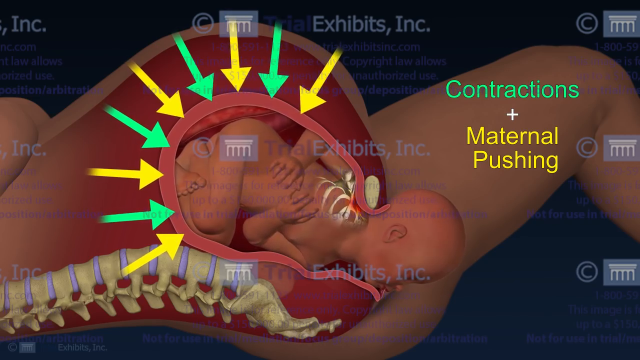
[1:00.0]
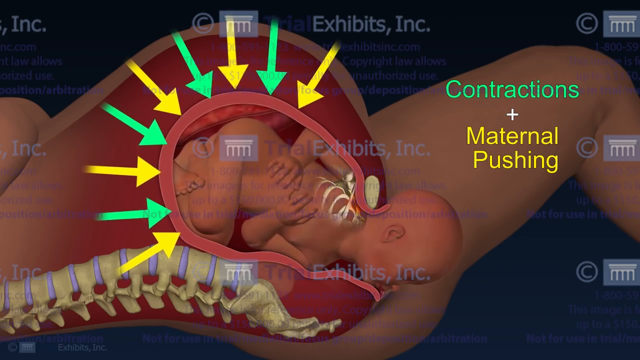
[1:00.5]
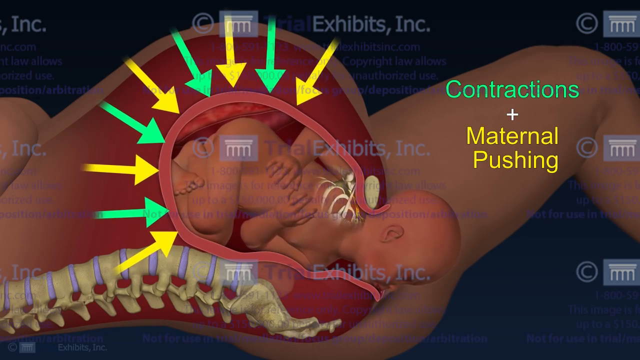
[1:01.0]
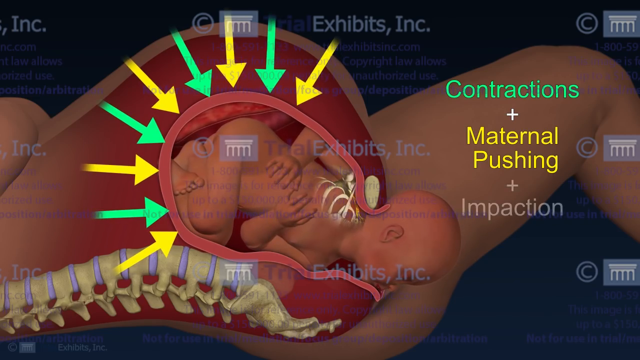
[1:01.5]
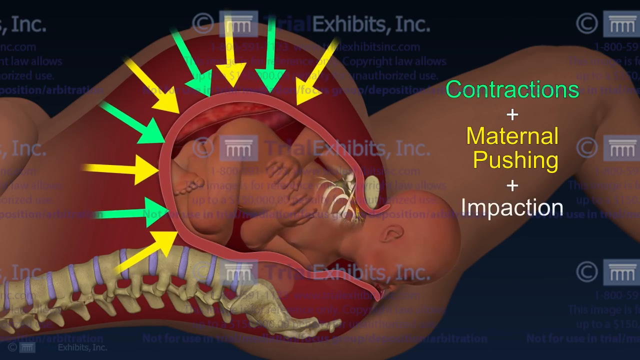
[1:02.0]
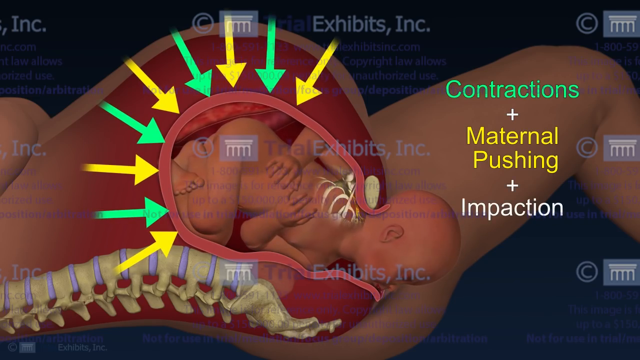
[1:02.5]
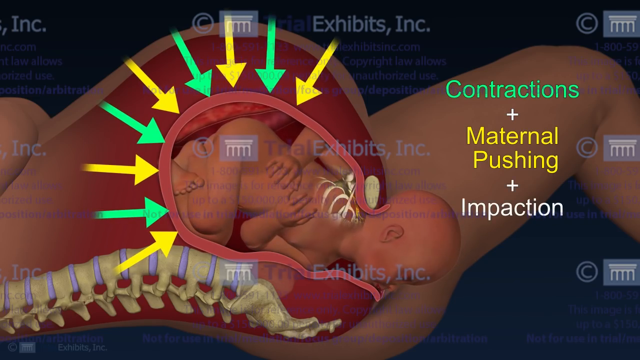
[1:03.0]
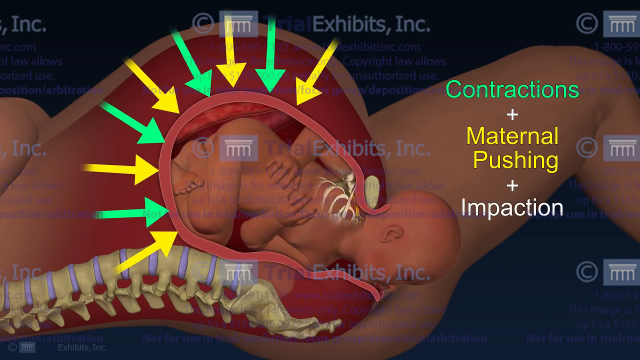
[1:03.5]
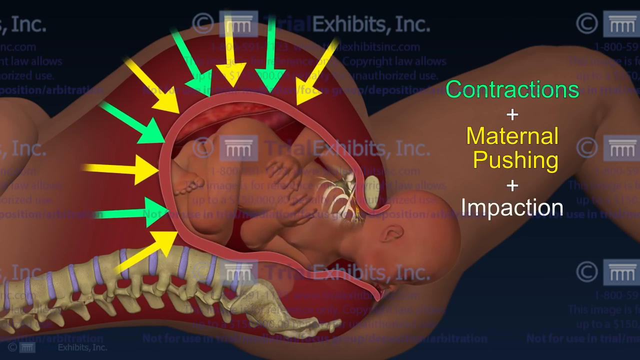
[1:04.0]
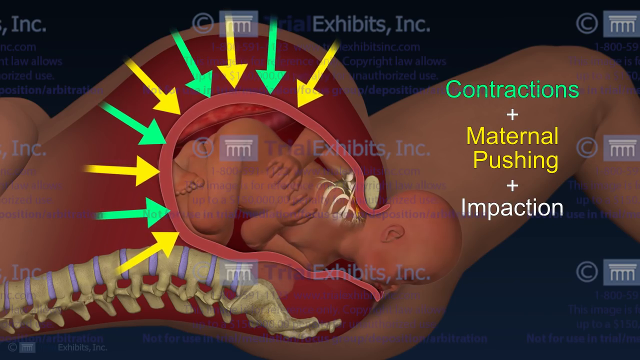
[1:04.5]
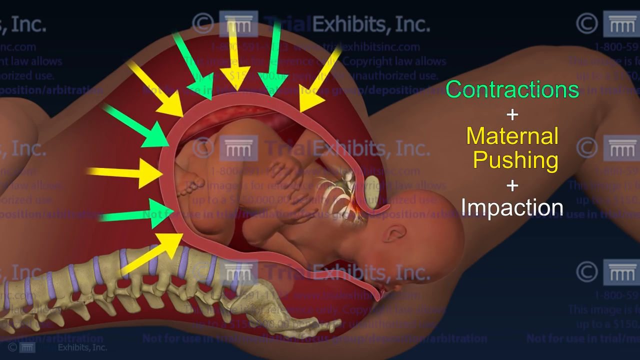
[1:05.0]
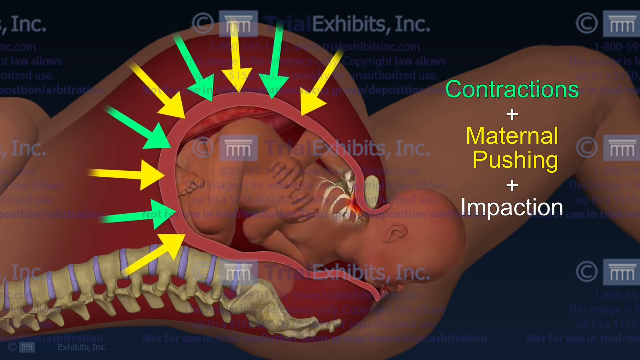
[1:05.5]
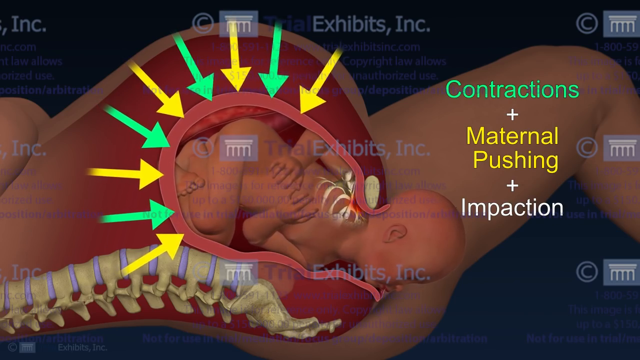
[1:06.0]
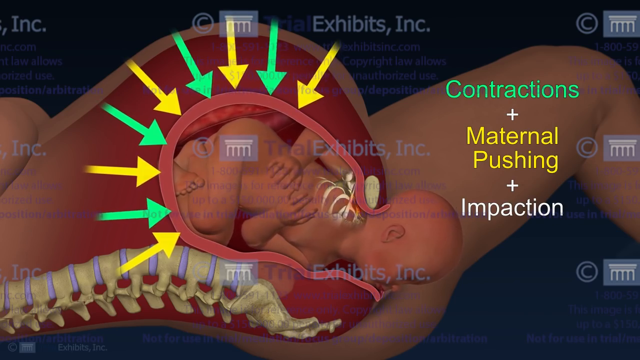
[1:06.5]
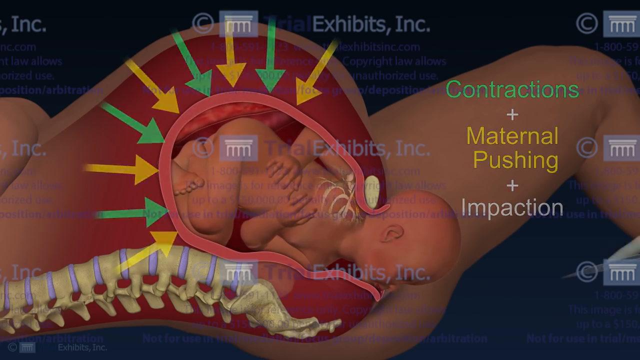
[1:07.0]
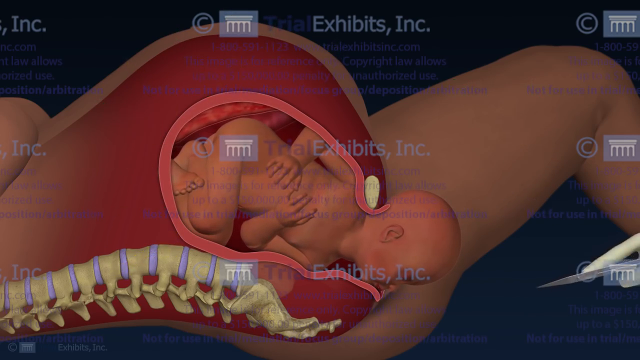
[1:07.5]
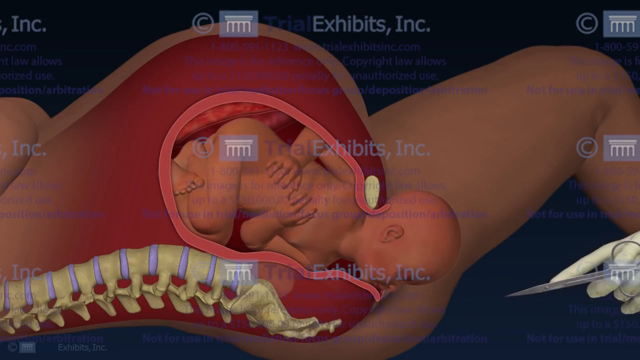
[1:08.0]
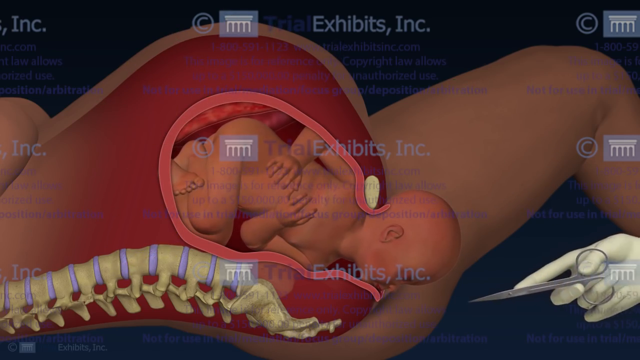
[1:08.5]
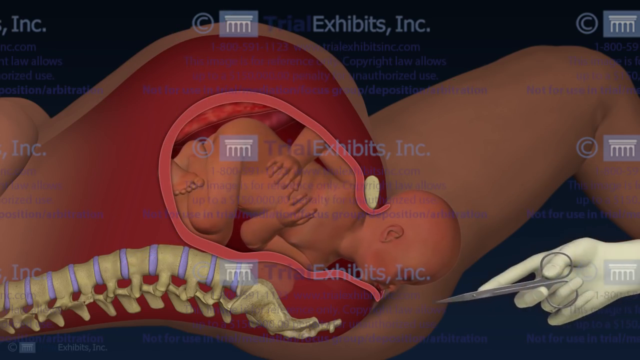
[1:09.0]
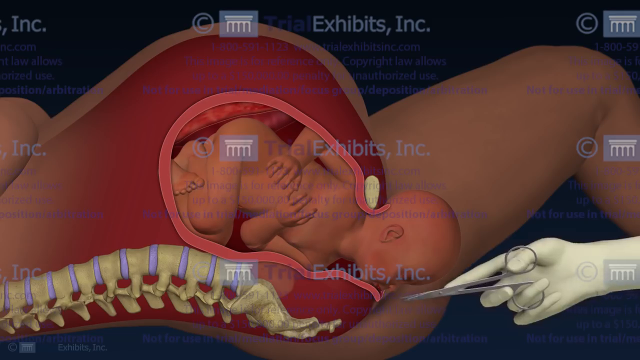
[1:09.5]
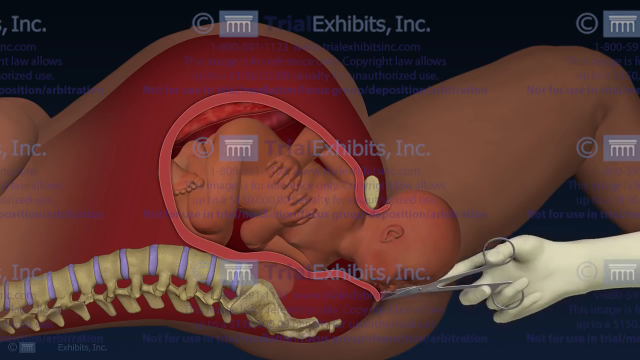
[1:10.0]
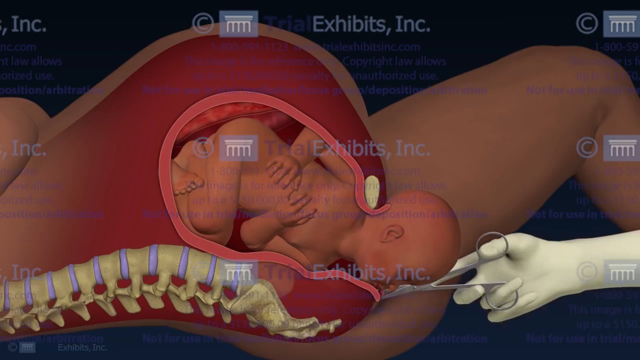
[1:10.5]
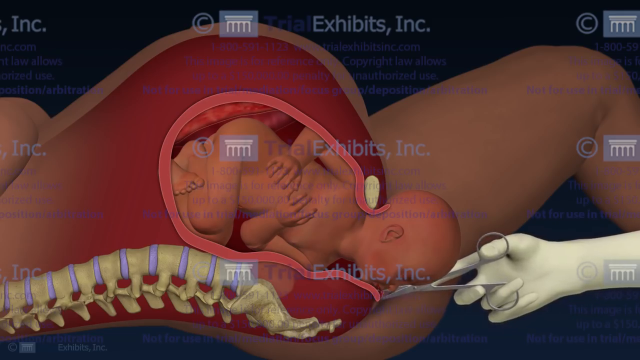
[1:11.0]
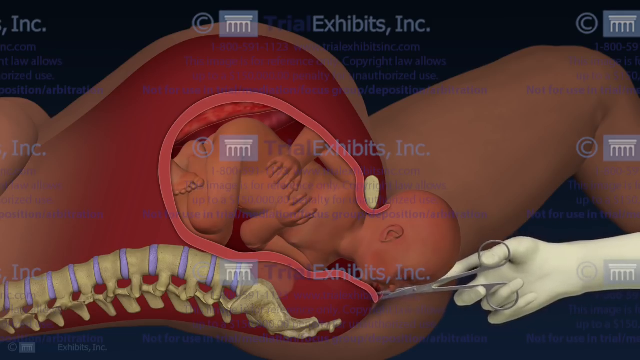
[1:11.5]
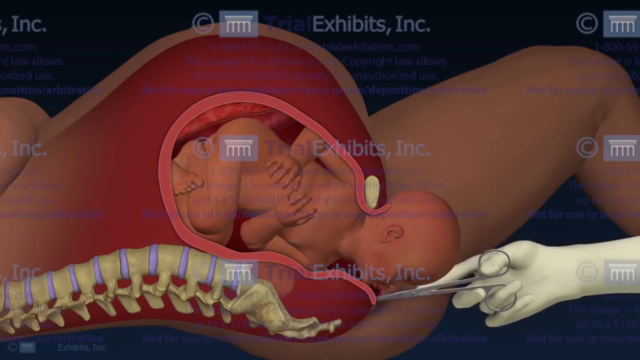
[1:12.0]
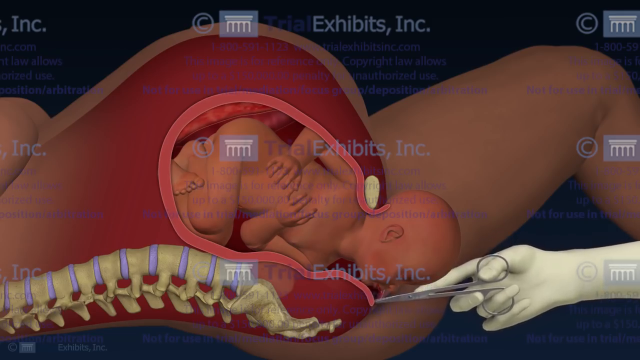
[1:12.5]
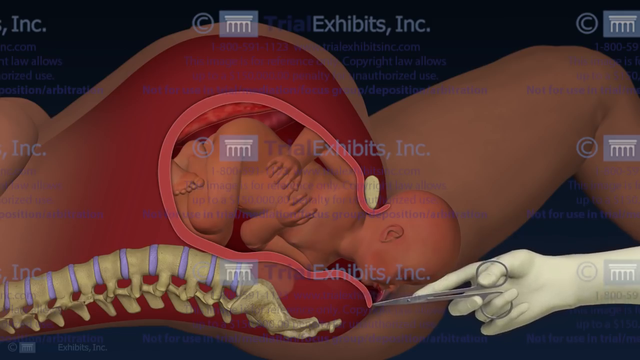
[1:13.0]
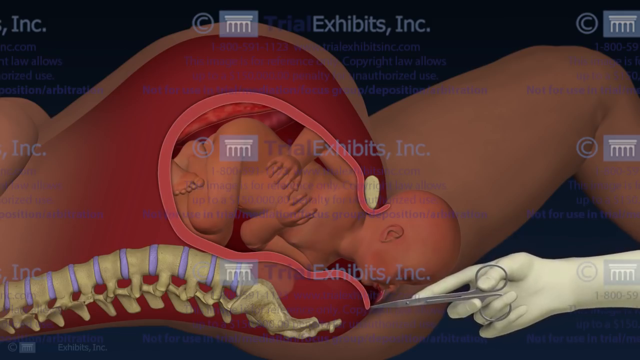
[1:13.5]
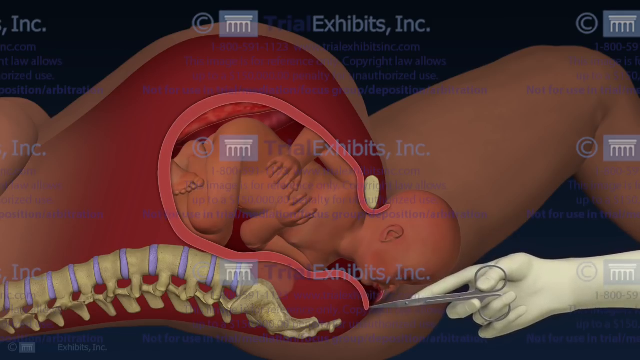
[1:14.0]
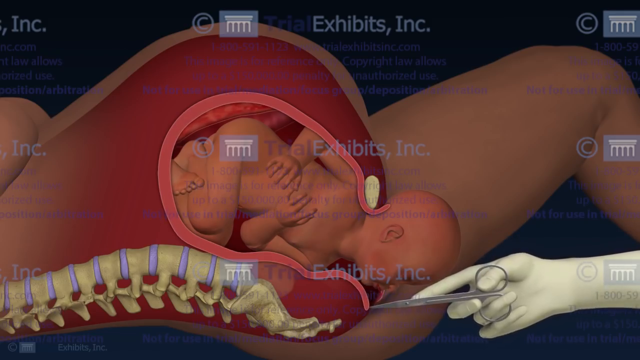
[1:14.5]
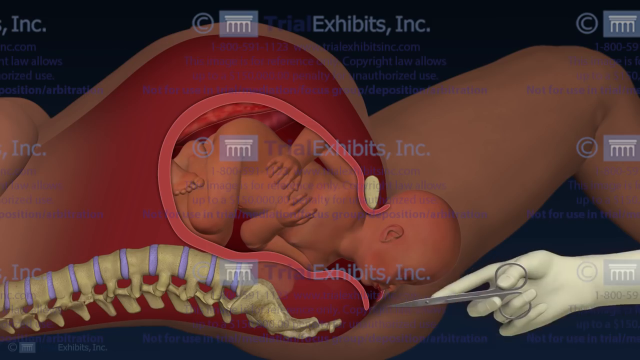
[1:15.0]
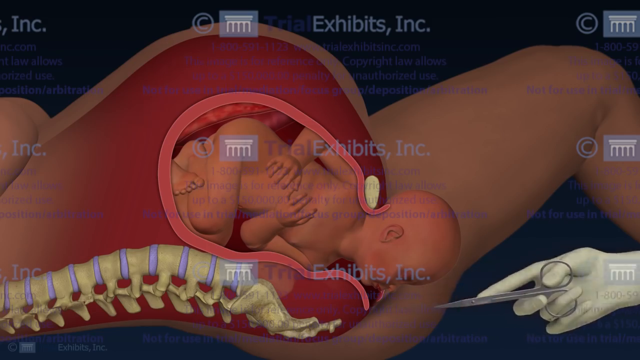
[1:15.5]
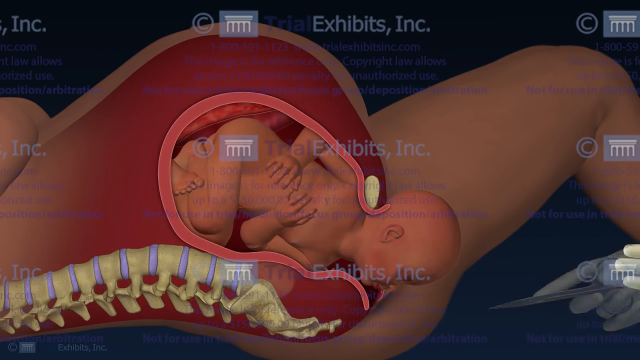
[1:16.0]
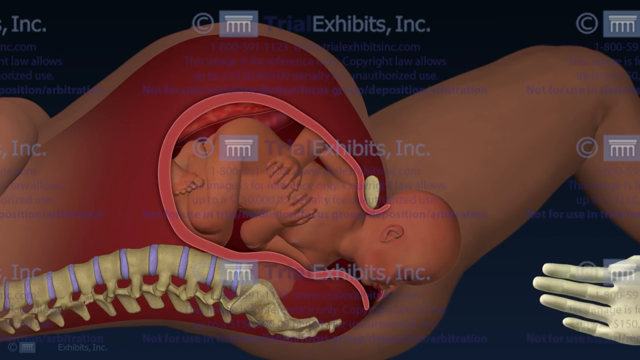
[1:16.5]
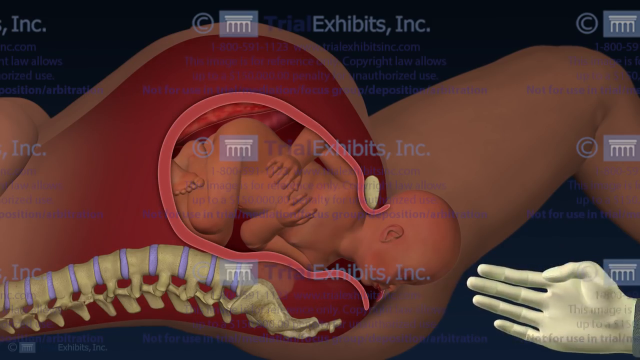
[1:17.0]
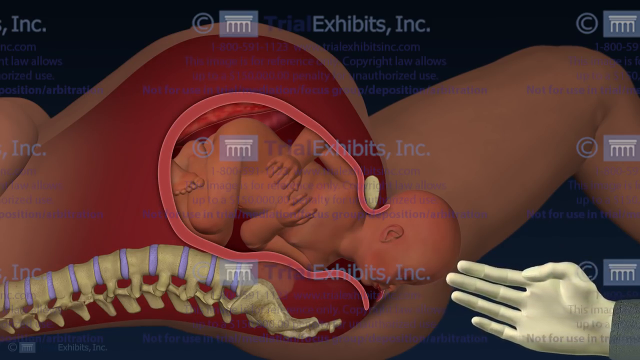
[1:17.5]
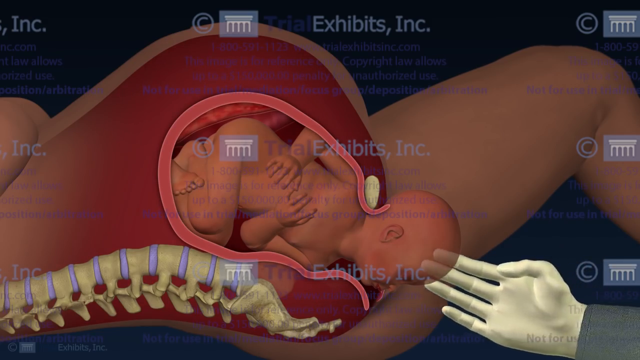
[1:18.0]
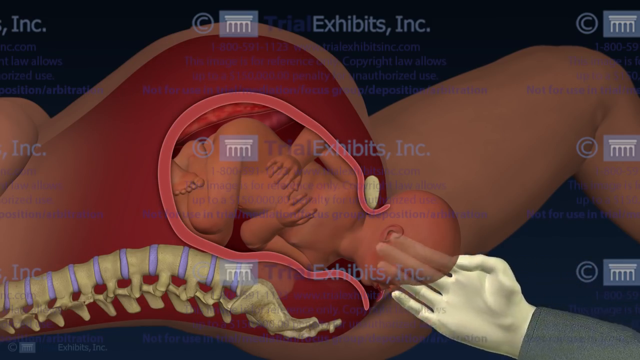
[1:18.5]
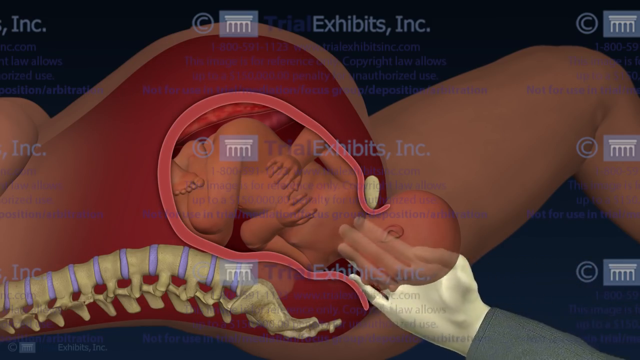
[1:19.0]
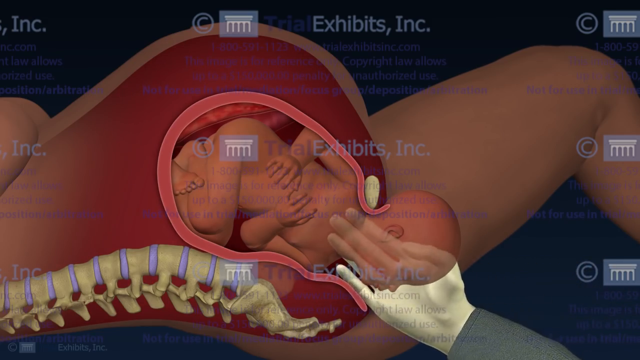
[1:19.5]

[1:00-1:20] The arrows change from compression to alleviation, expanding outward. Text on the right now reads "contraction" in green, with "plus maternal pushing plus impaction" underneath in white. The lining thickens as it compresses back down, alternating between expanding and pushing down at the bottom. A surgeon's gloved hand comes in with scissors and kind of prods at the opening where the baby's face is coming out, seemingly pushing down the lining by the mouth and pushing it back, probably to relieve pressure so the baby can breathe more easily. The other hand then comes in, turned over, and looks like it is trying to pull the baby up by the head, taking the side of it and starting what may be a gentle tug to remove the baby.